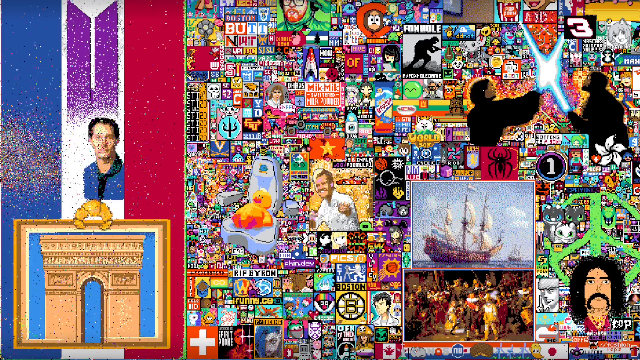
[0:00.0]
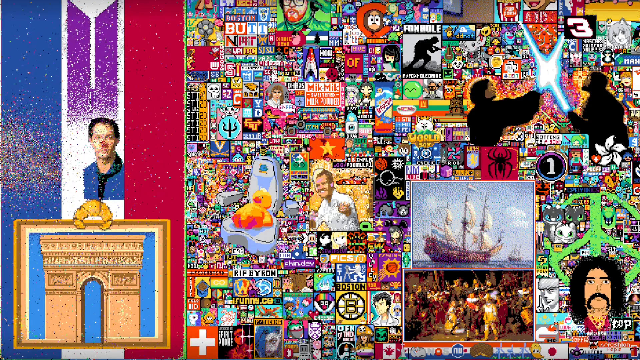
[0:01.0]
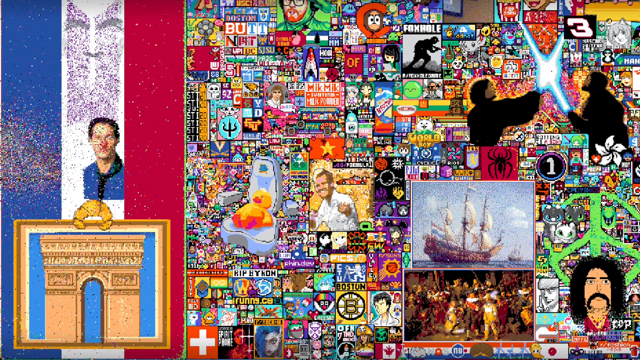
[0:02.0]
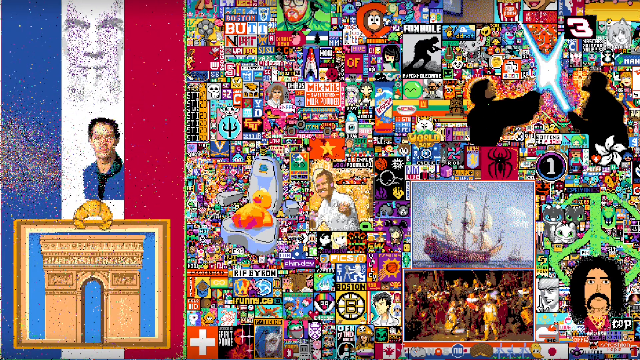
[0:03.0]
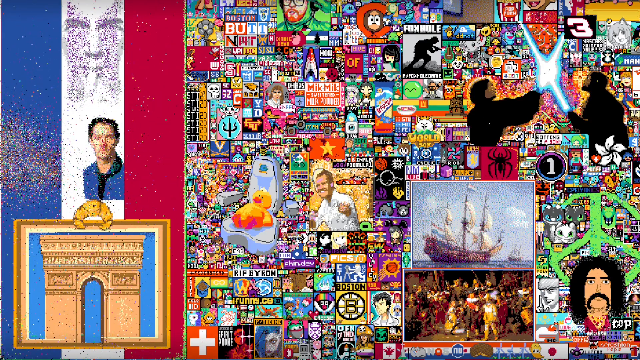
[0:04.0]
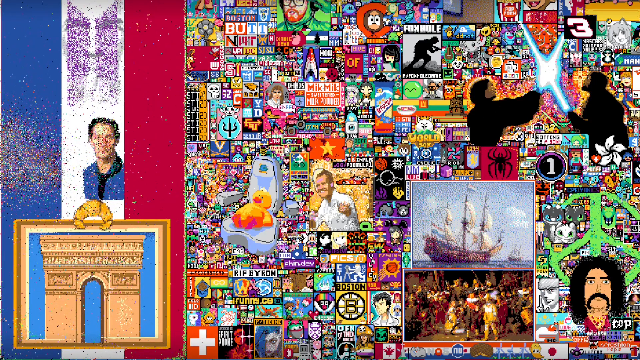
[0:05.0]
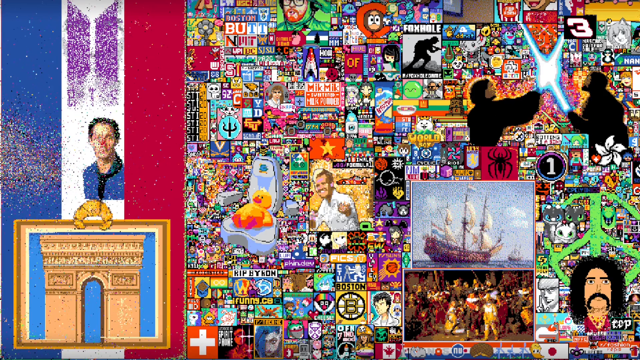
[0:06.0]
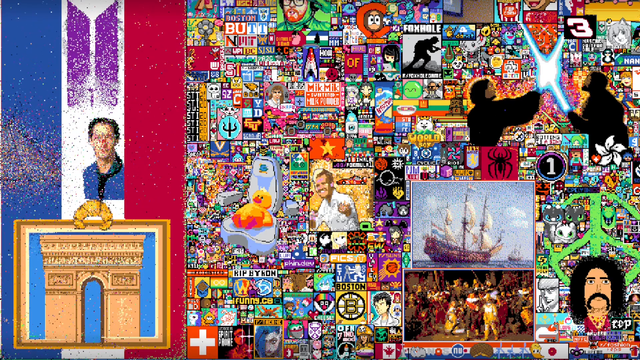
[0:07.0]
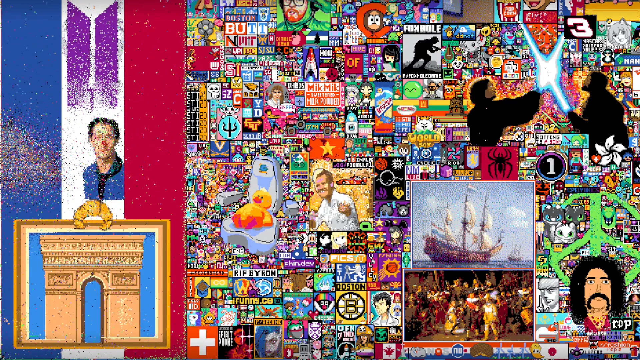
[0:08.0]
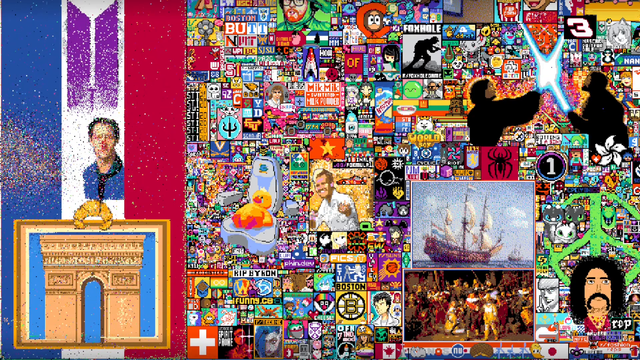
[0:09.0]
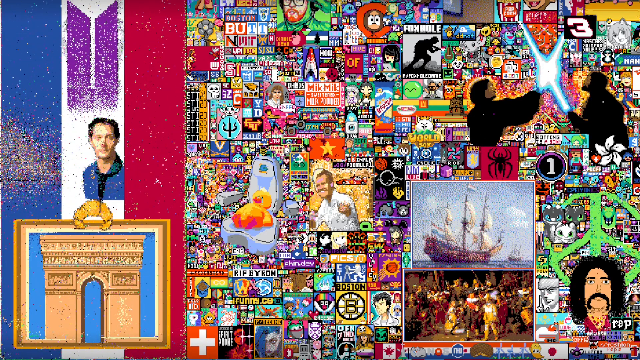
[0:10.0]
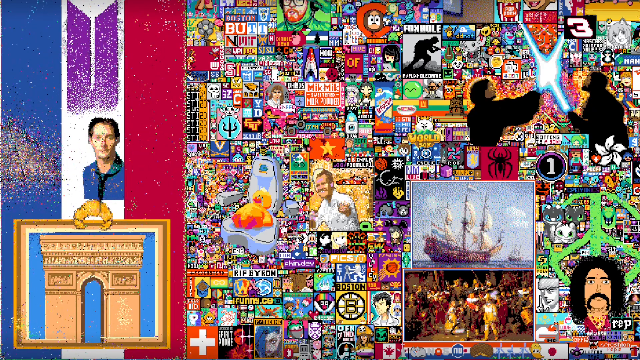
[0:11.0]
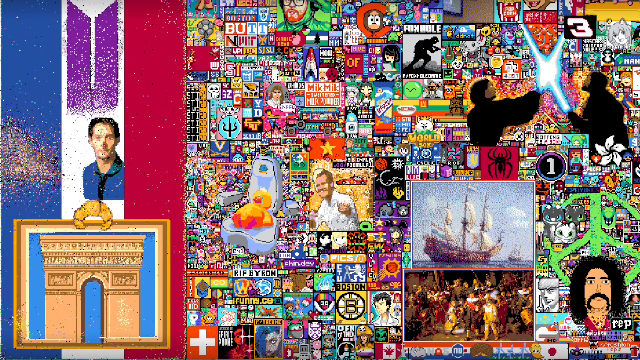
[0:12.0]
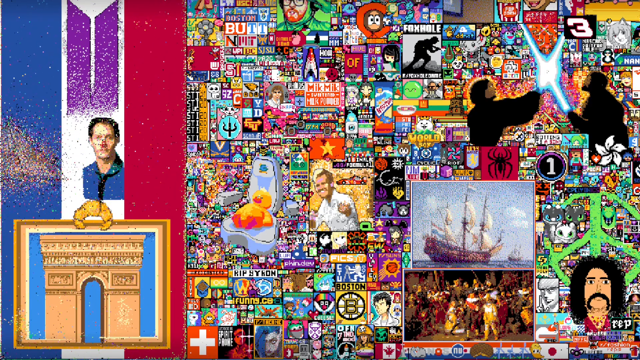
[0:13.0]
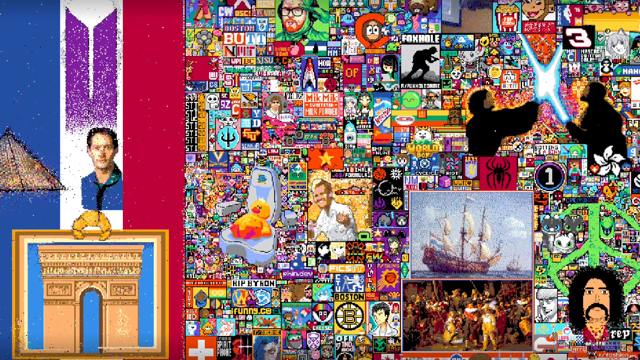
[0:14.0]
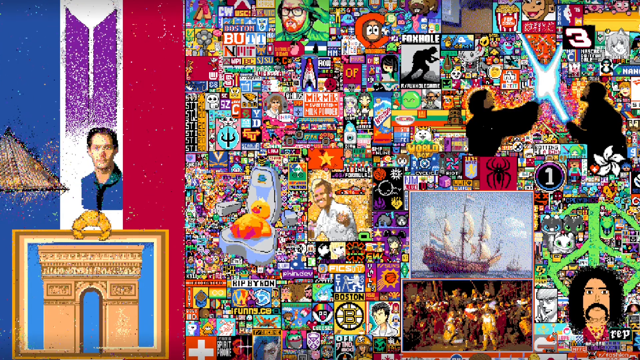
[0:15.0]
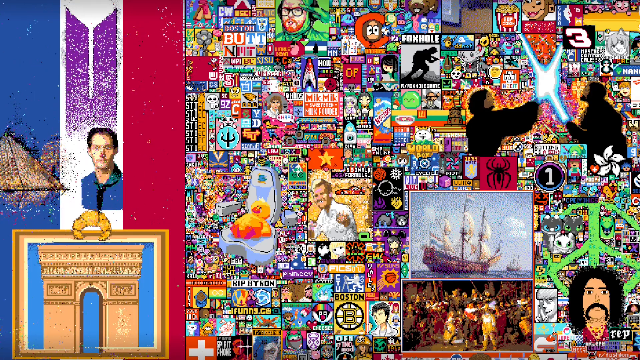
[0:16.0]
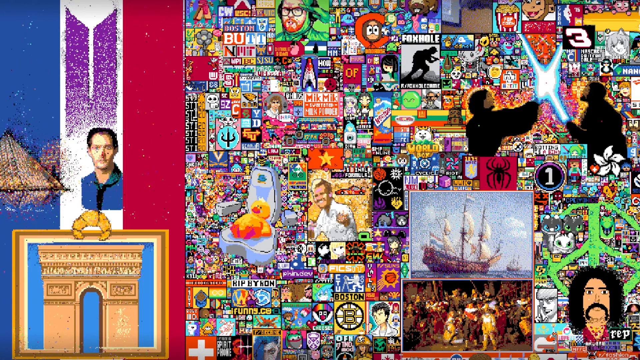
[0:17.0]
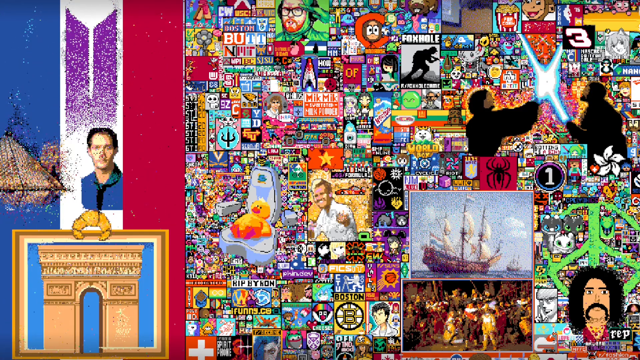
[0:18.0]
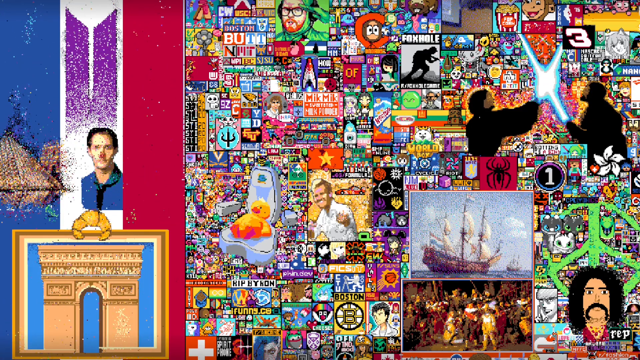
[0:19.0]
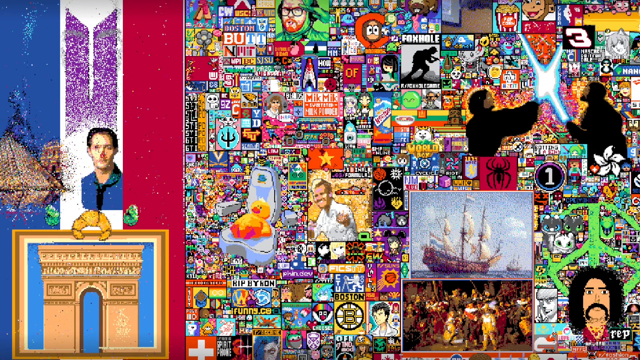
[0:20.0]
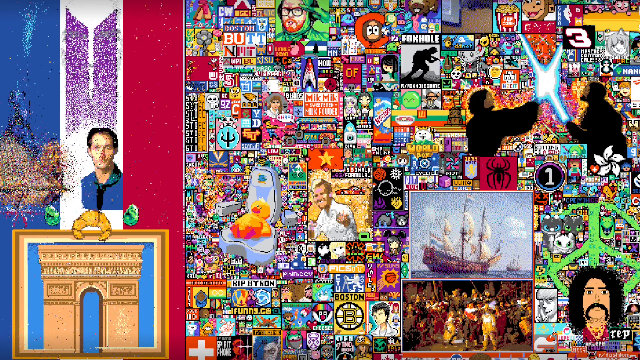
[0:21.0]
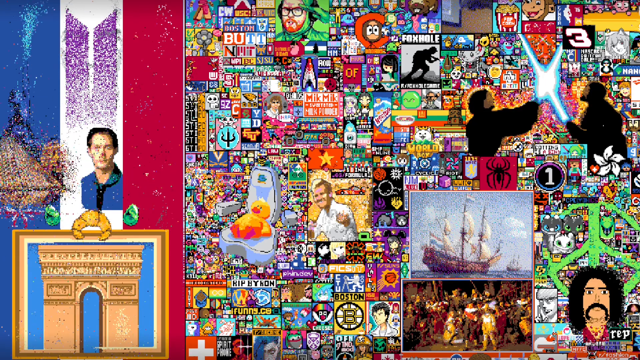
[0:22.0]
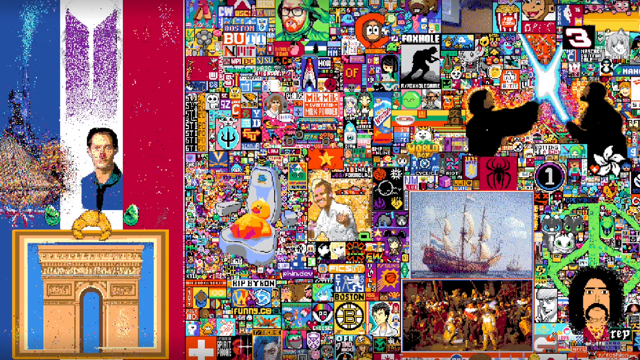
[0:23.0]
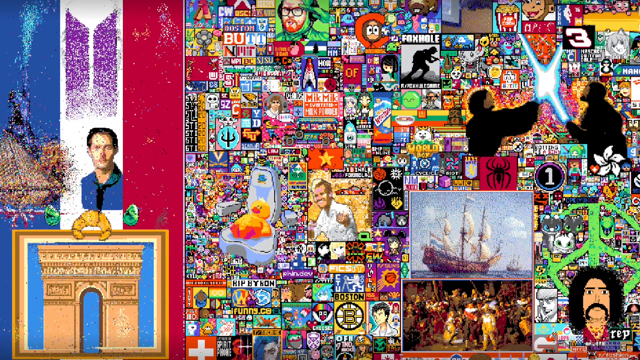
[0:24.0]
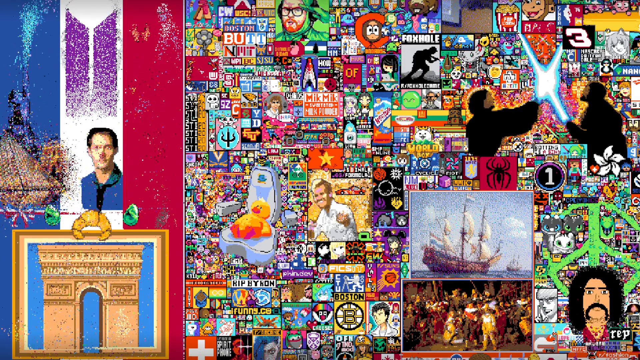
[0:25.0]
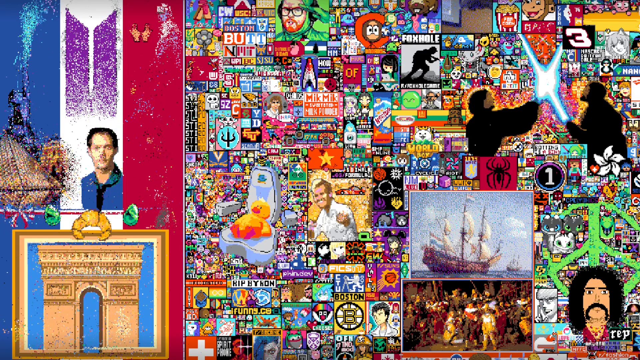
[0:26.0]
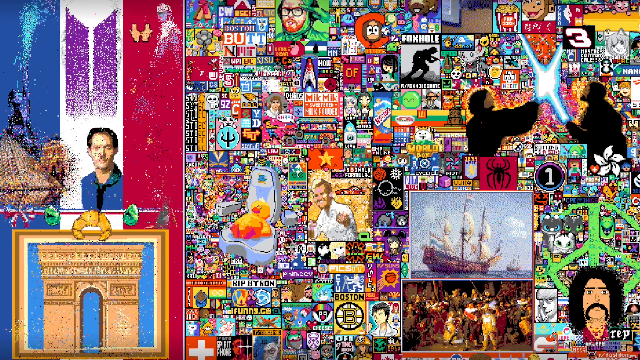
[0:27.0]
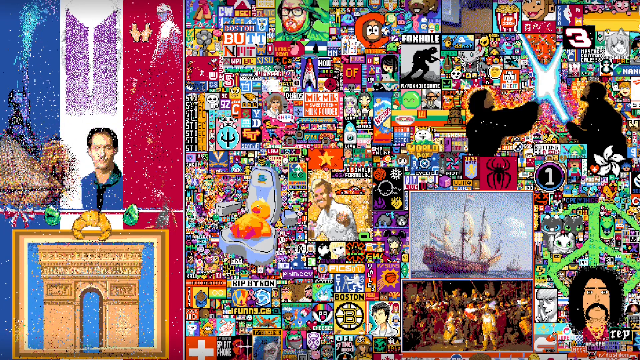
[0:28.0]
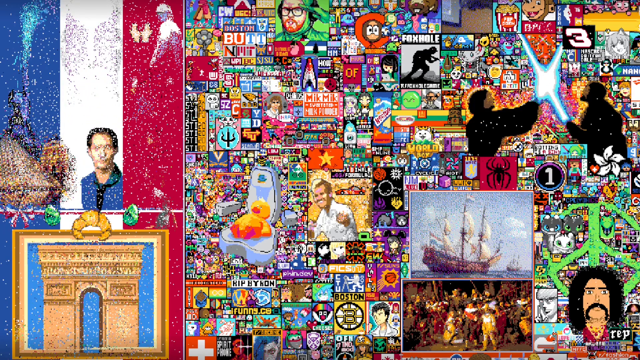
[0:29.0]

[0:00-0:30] A compilation of pixelated art packed with references. The purple BTS logo appears, along with the France flag and what is probably Gordon Ramsay. There is Star Wars imagery, a flying Spider-Man, Roman arches, and a Belgian croissant. The BTS logo is disintegrating. An unidentified man in a blue shirt, probably someone famous, appears. There is the Boston MLB team, a picture of a ship, and the dragons from How to Train Your Dragon. All of these are pixelated art.